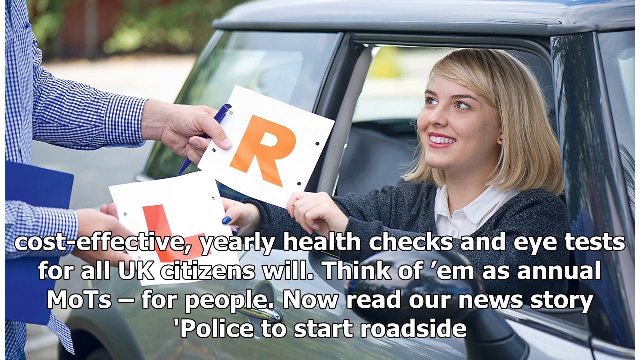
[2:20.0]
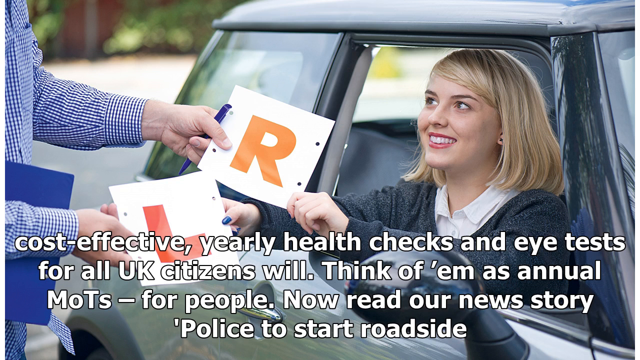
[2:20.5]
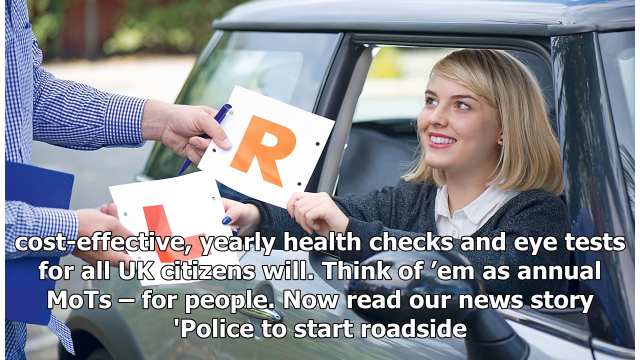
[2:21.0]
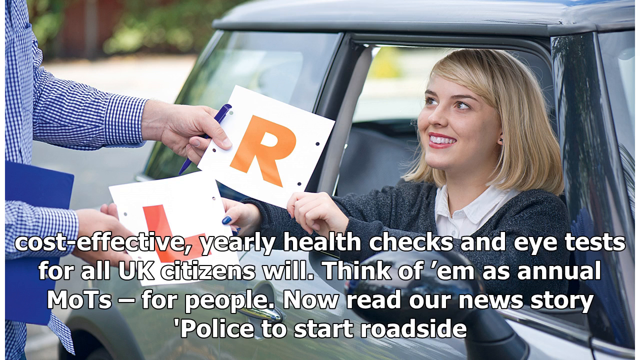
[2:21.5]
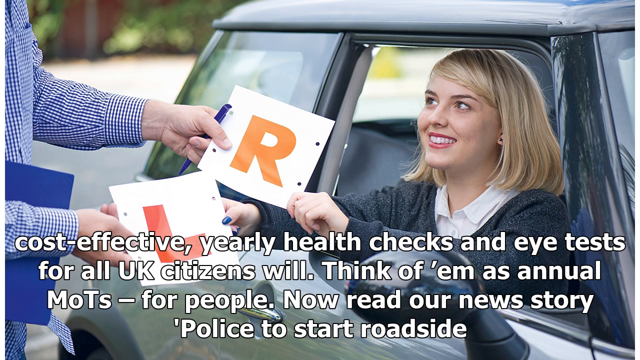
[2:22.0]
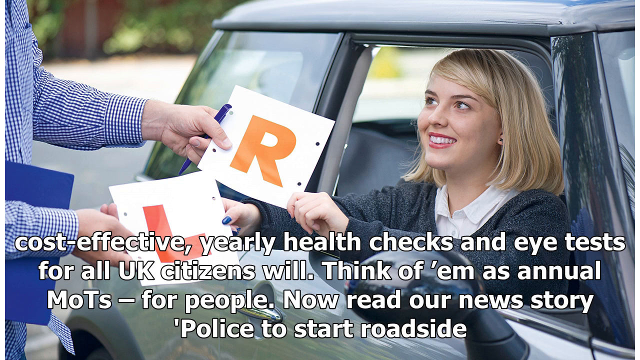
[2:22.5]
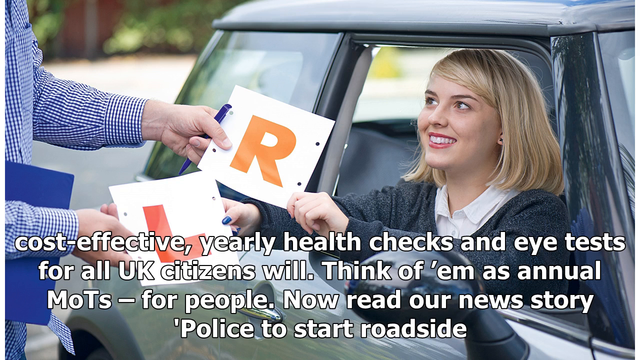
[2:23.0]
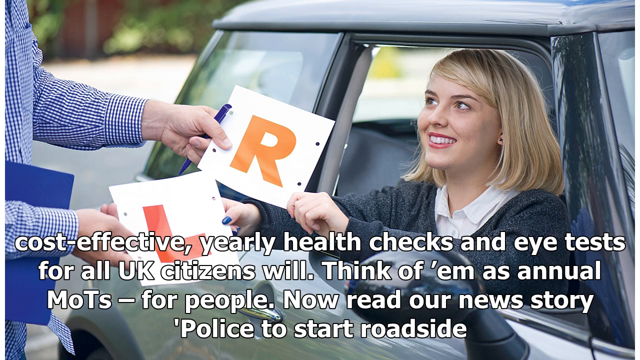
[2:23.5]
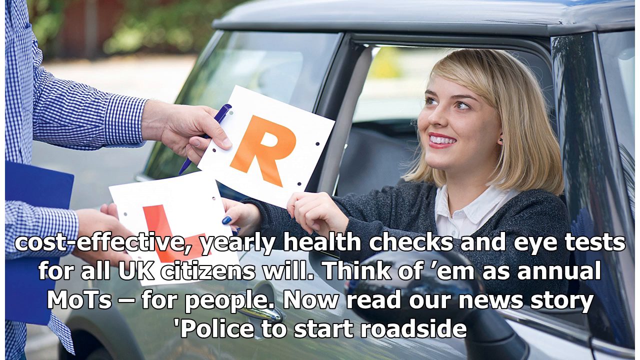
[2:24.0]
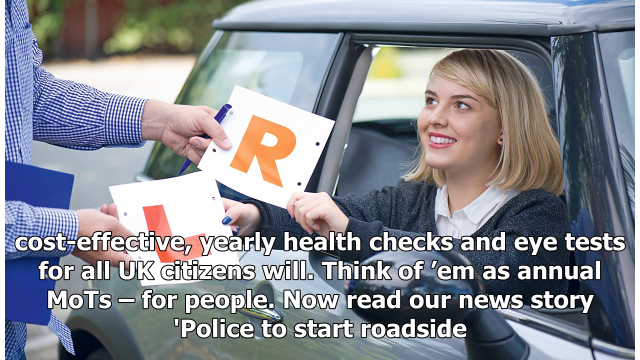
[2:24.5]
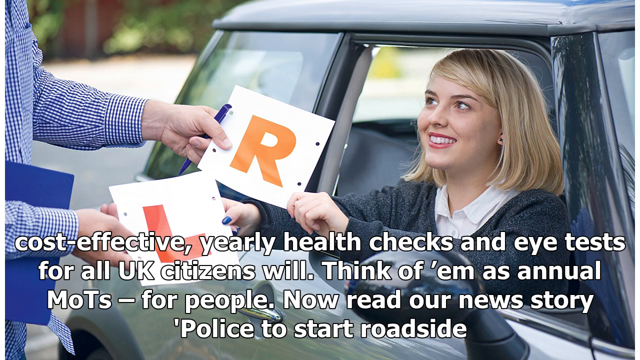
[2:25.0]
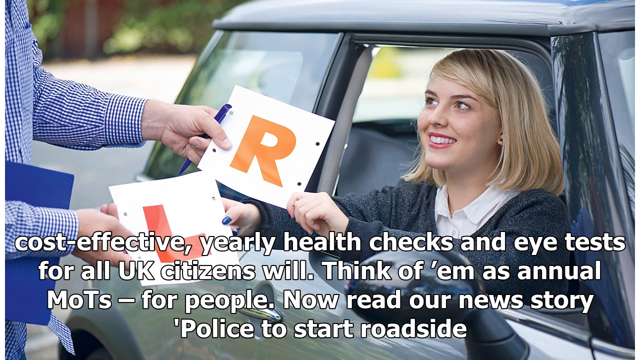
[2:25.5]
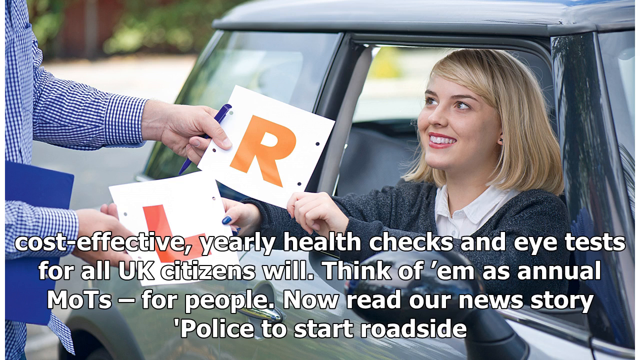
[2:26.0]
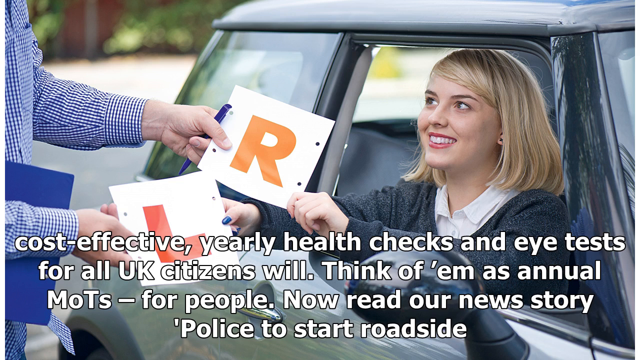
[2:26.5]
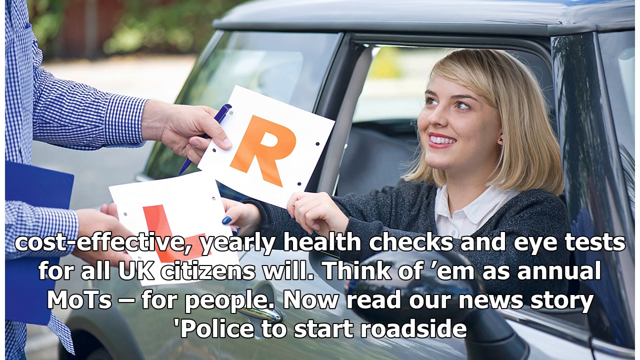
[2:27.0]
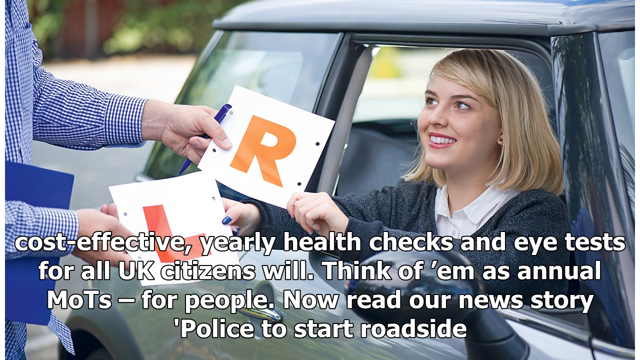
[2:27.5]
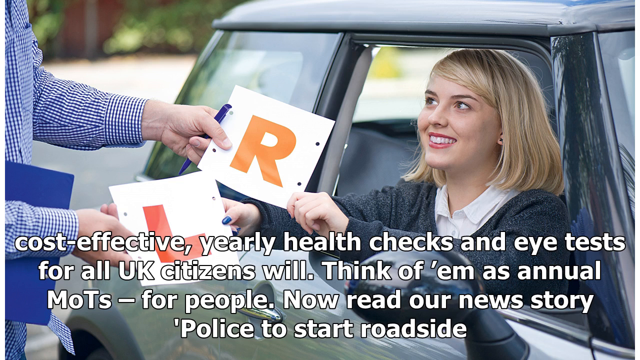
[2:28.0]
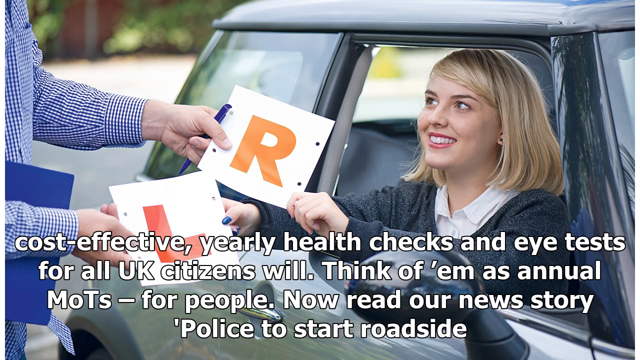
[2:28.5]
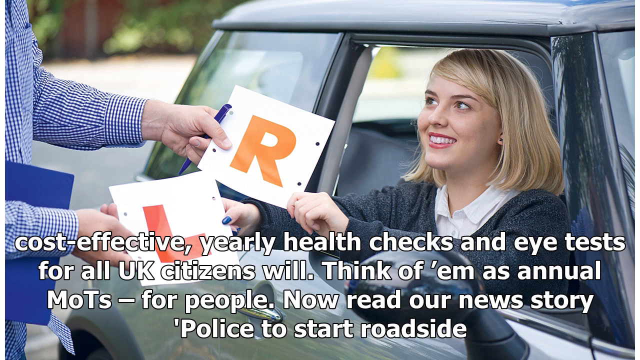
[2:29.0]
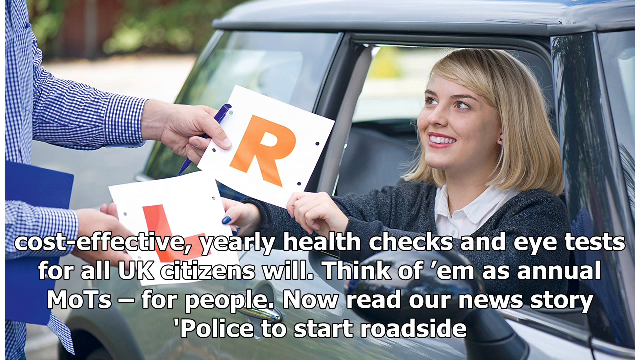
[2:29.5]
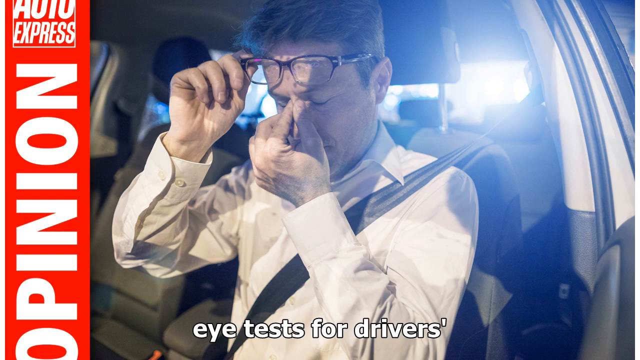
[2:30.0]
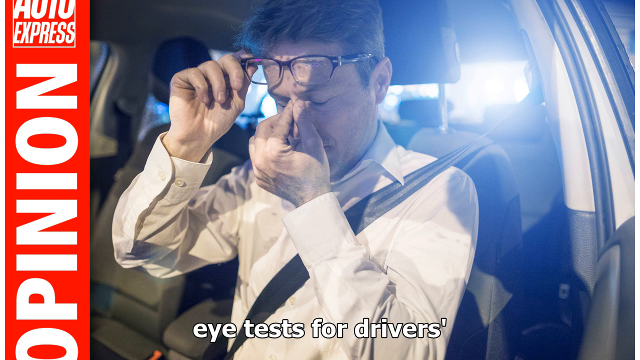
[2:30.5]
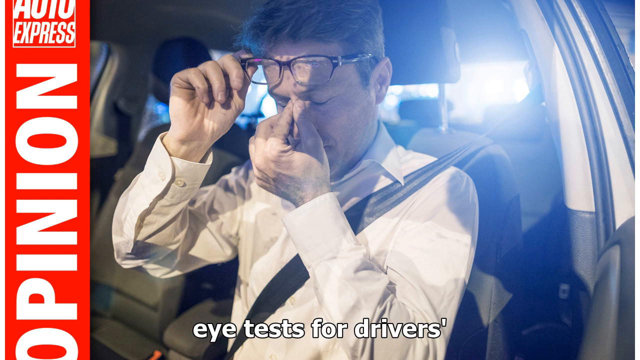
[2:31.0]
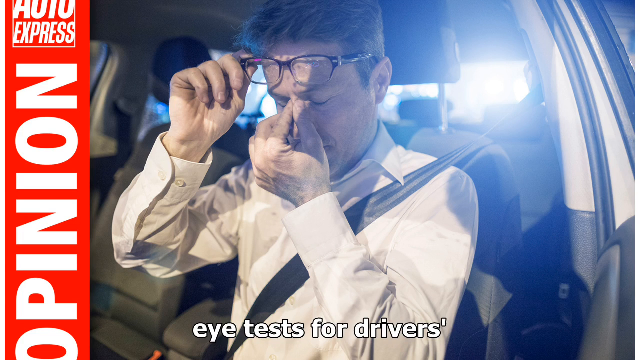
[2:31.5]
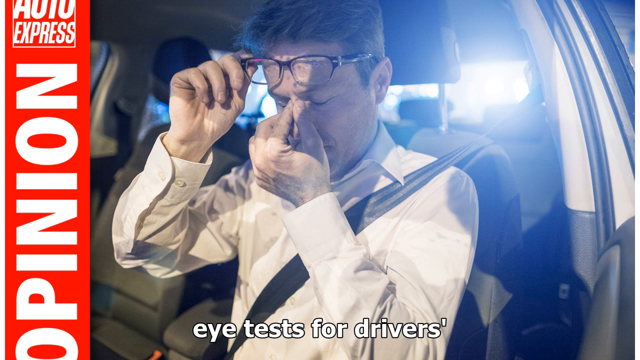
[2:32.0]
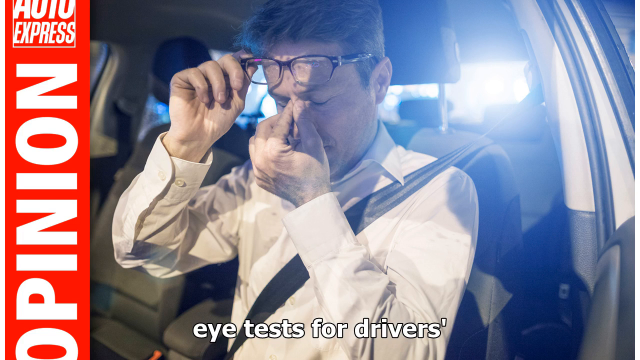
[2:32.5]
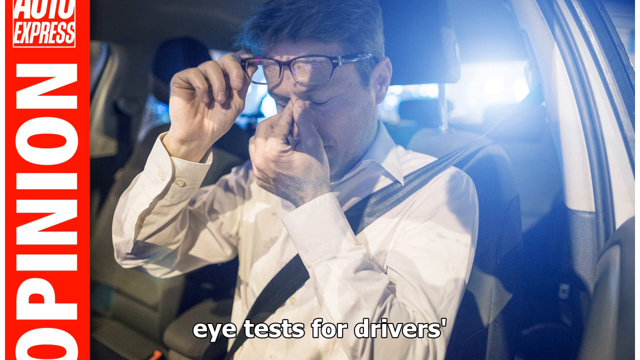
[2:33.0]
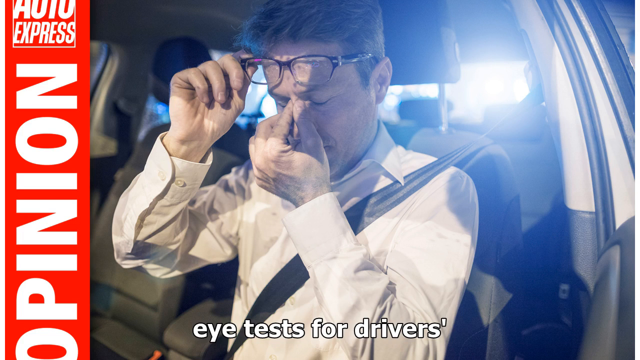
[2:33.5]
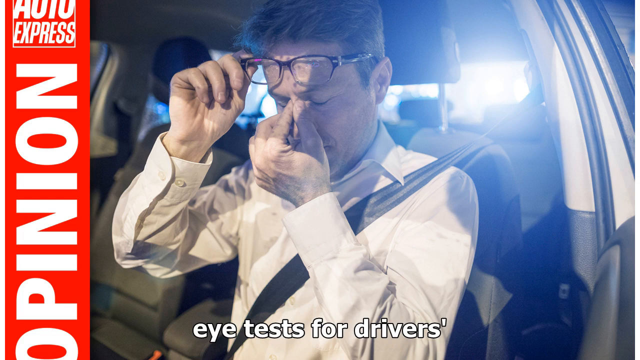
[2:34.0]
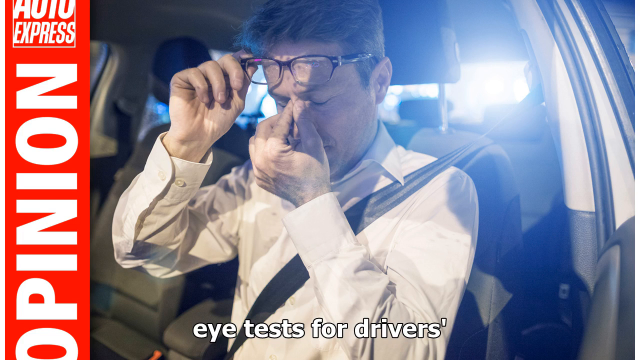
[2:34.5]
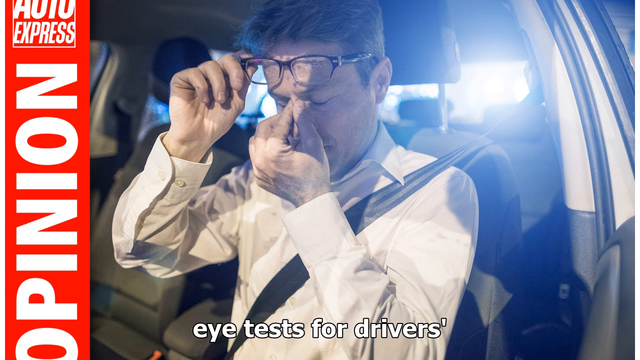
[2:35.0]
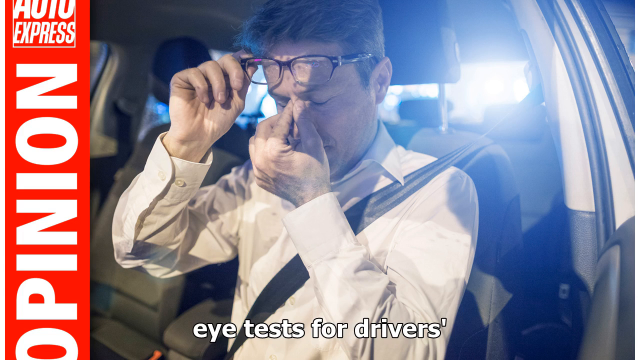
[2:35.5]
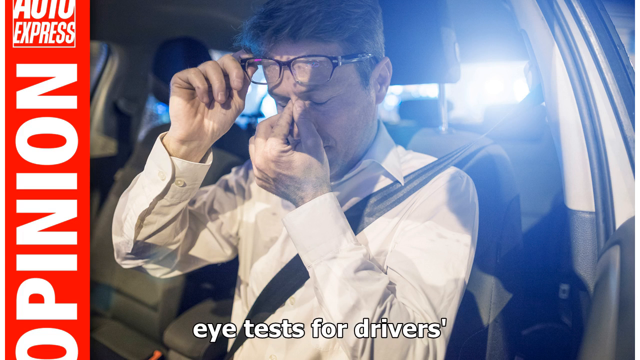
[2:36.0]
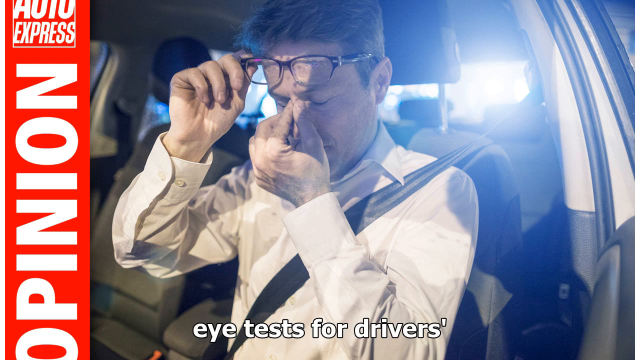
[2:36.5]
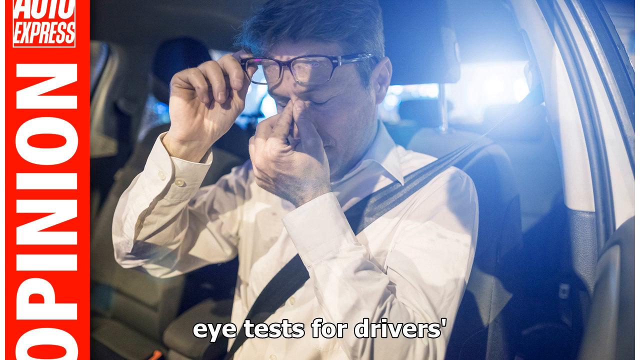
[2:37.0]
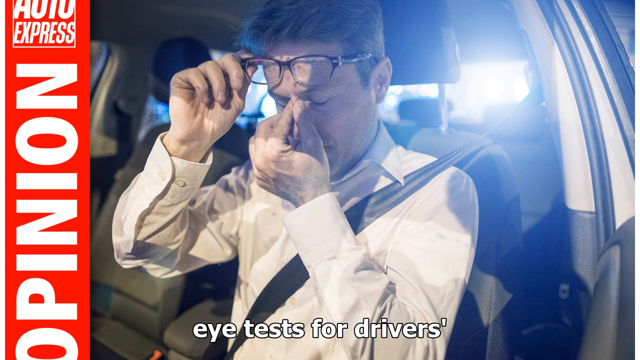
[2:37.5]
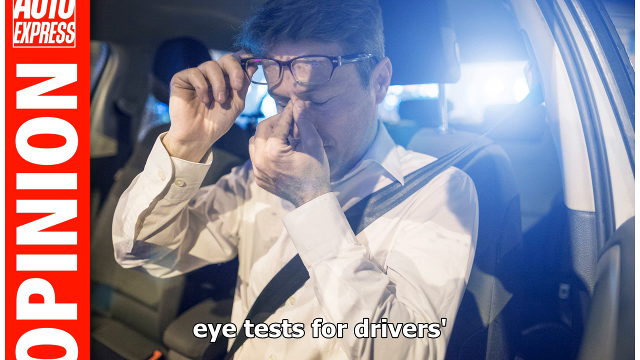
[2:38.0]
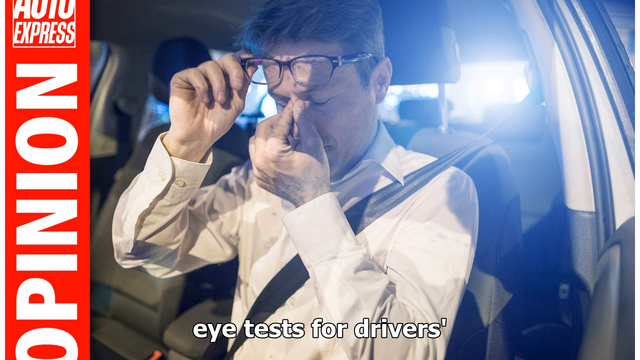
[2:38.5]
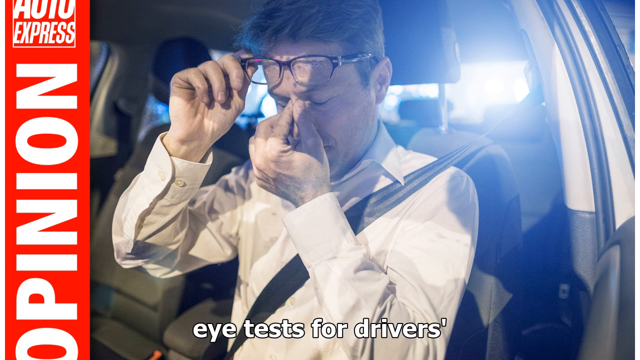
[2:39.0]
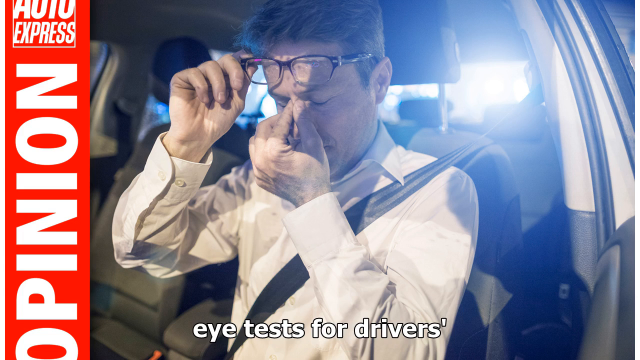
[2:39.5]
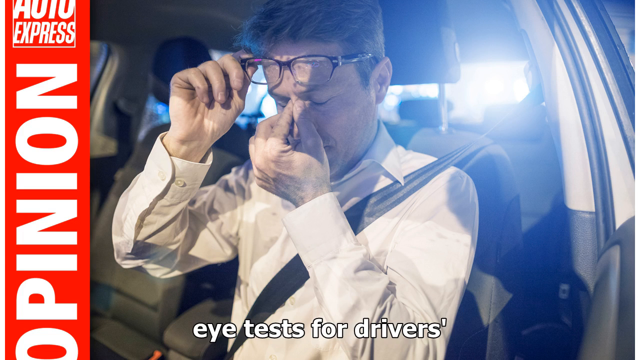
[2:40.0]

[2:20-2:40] Text refers to cost-effective yearly health checks and eye tests for all UK citizens, then reads "think of them as annual" and later "now read our news story." A woman looks out the side of her vehicle holding the letter R and reaches to grab the letter L from the person outside. The video cuts to a man in a car with his glasses up over his forehead, kind of rubbing the bridge between his eyes as if something is bothering him or he has a headache.